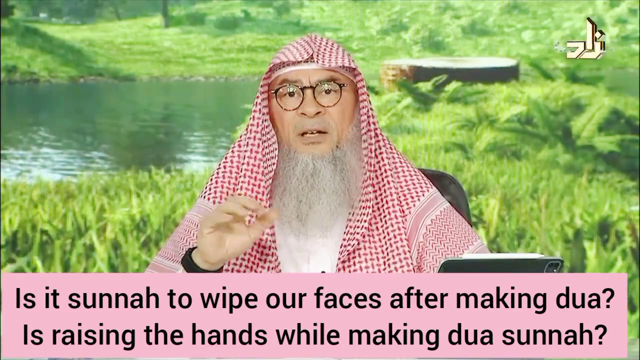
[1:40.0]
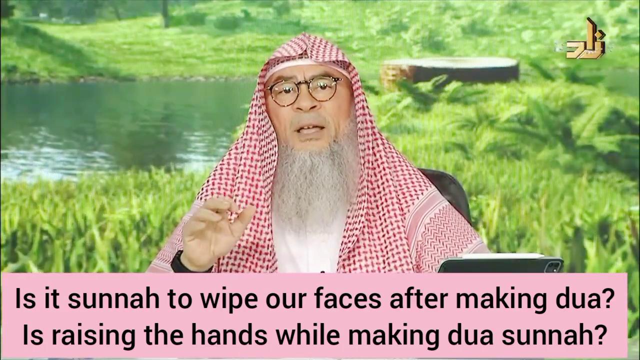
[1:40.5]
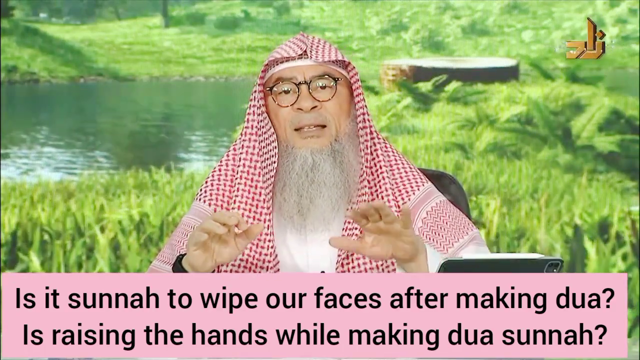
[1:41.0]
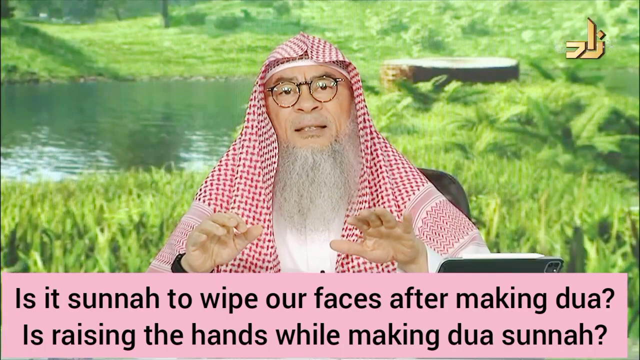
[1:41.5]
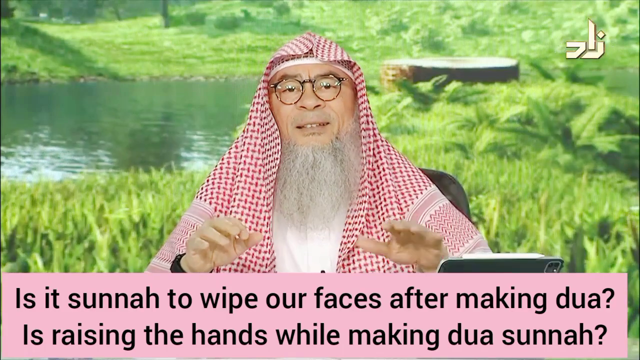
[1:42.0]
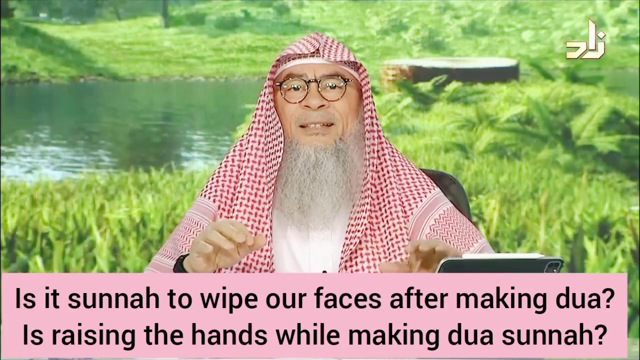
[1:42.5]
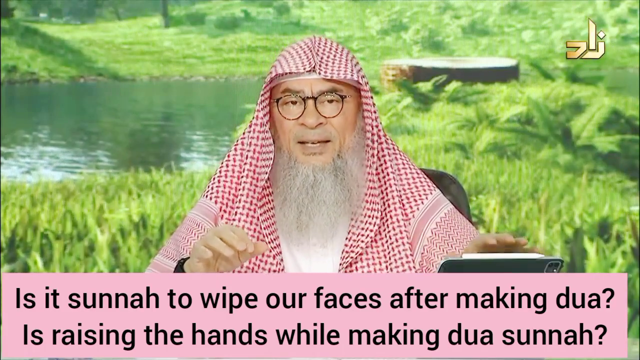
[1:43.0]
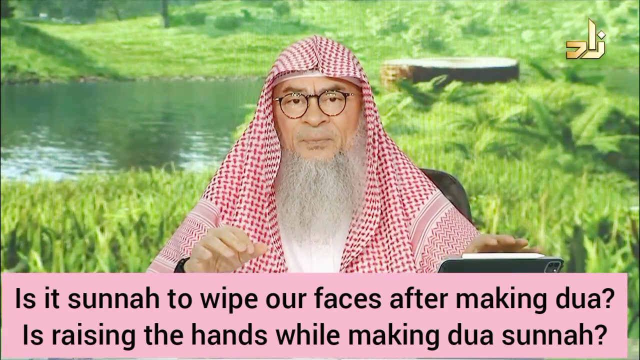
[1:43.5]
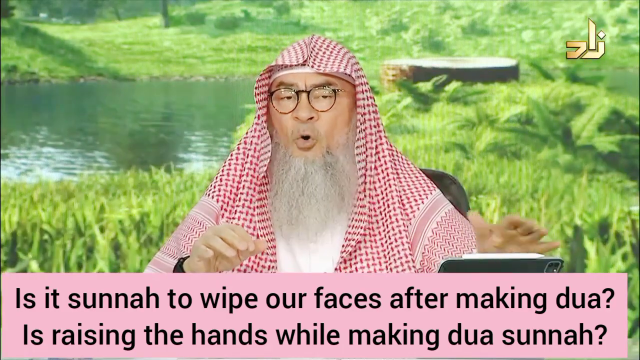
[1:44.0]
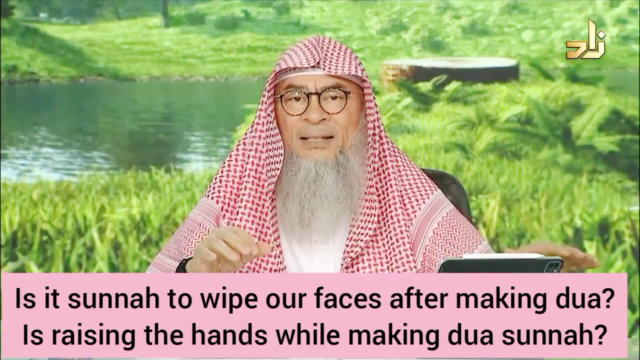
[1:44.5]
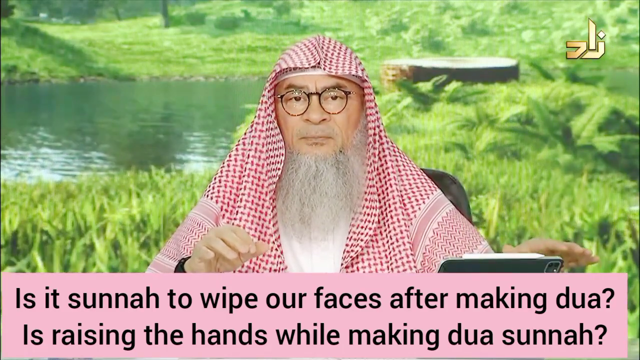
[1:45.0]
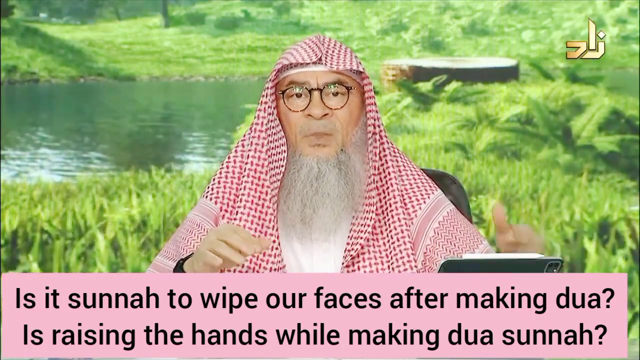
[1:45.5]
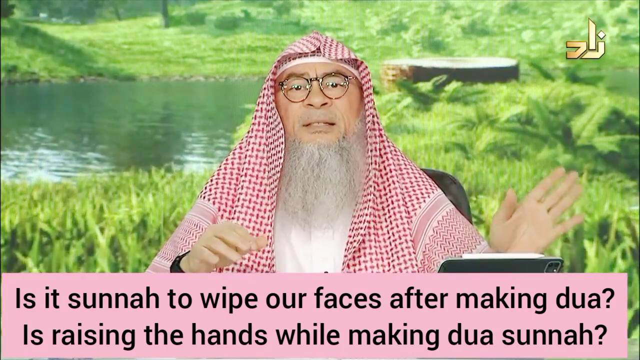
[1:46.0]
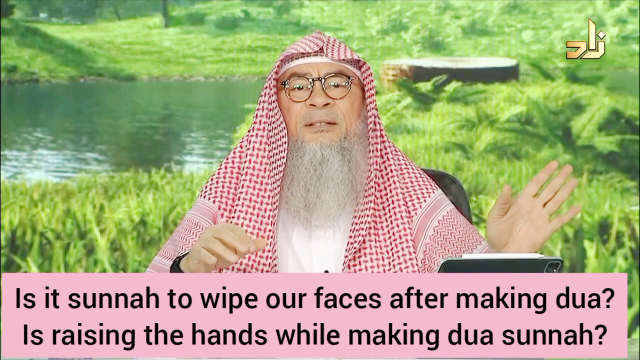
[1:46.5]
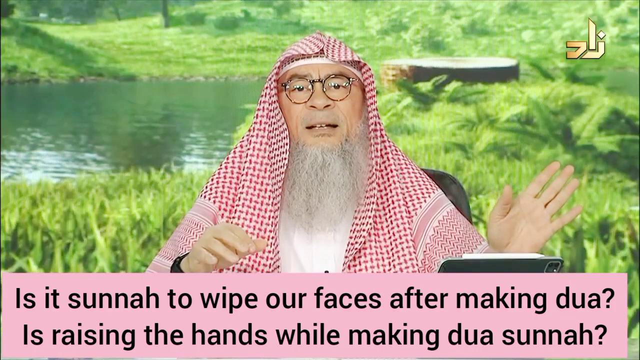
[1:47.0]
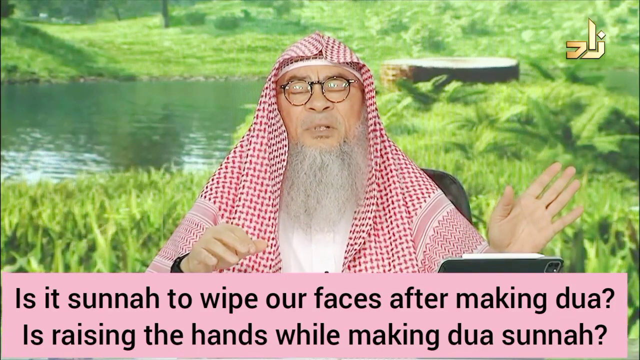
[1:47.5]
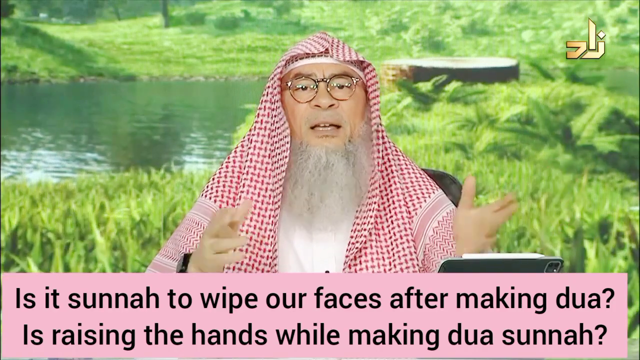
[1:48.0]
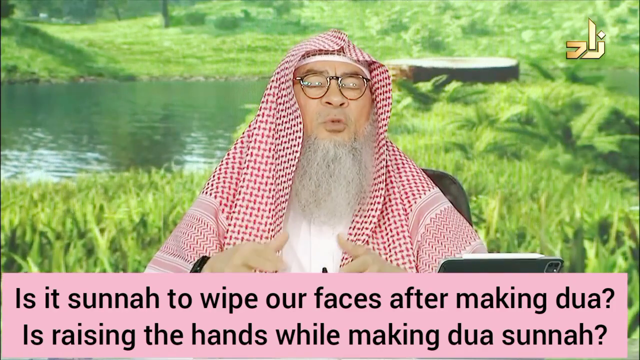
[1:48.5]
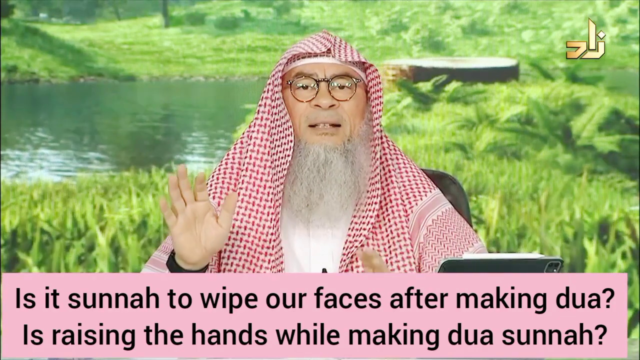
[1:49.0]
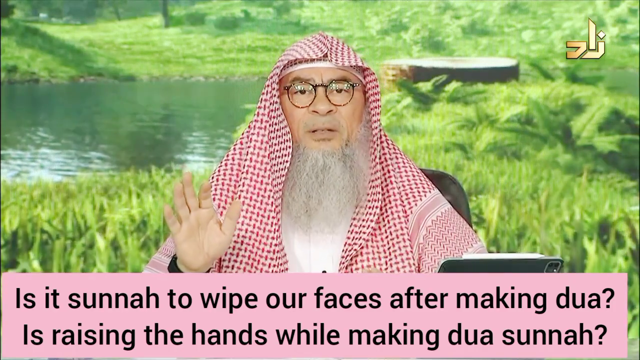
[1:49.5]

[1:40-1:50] The host remains at the same angle, with the same text at the bottom and the same background. He is very animated, talking with his hands. The angle, the background and the questions at the bottom do not change.